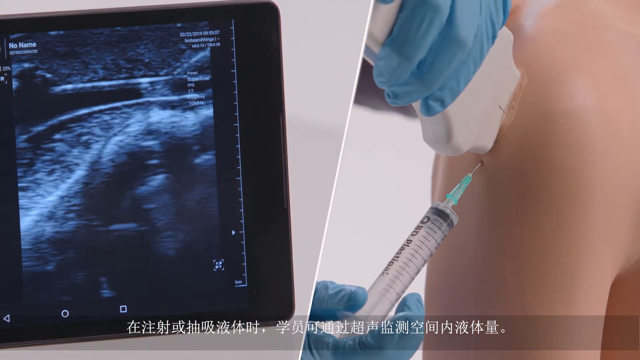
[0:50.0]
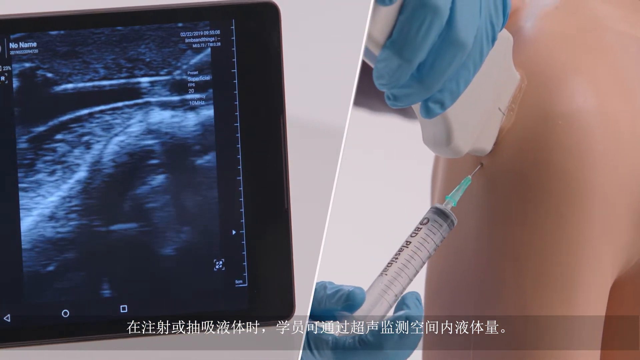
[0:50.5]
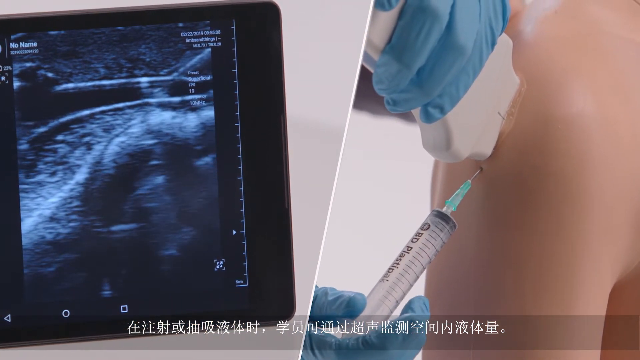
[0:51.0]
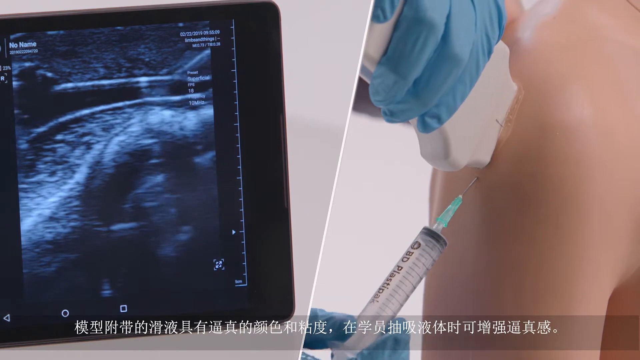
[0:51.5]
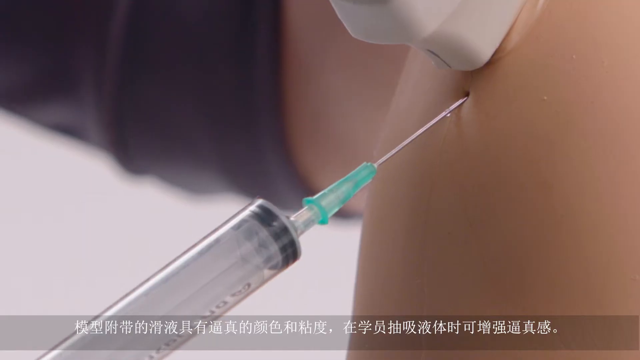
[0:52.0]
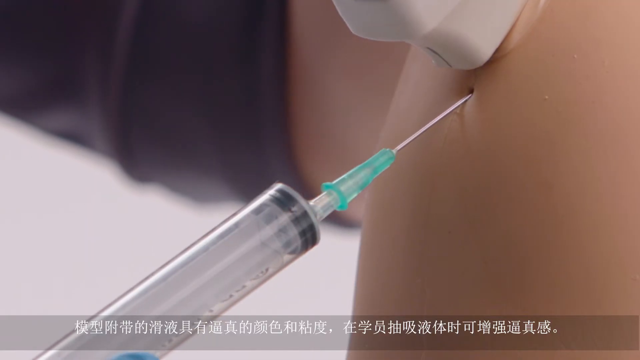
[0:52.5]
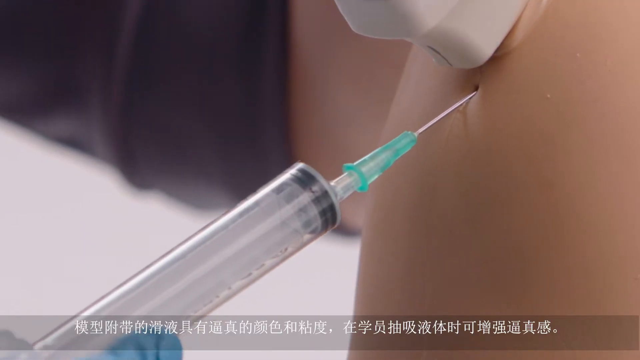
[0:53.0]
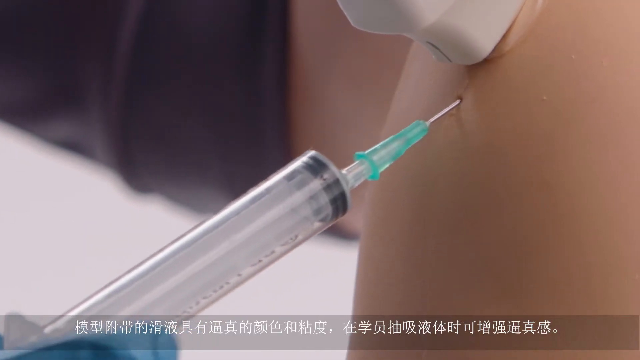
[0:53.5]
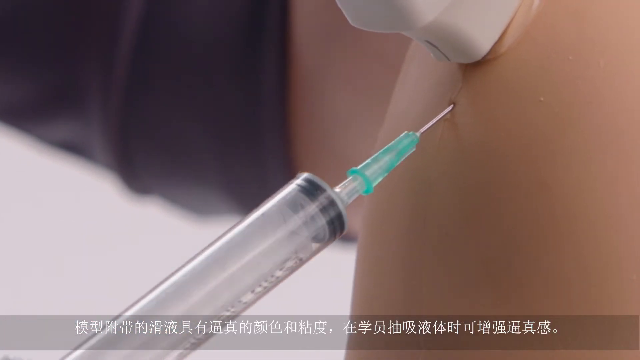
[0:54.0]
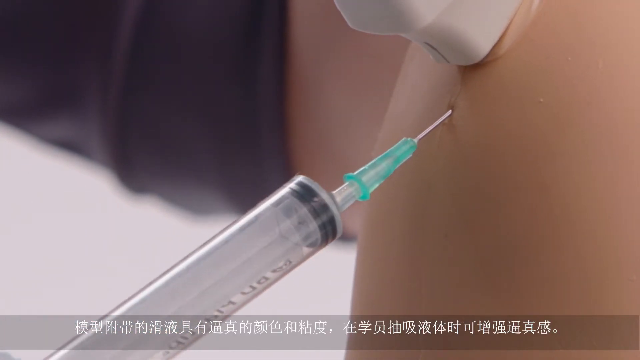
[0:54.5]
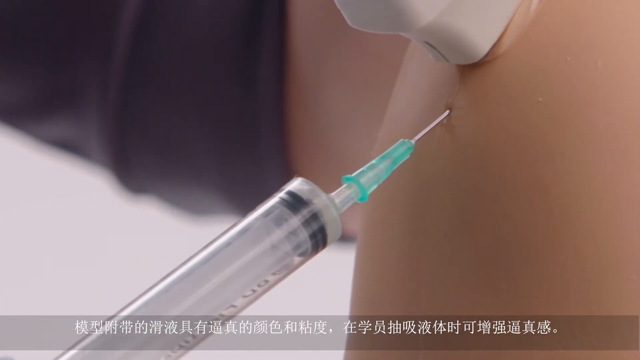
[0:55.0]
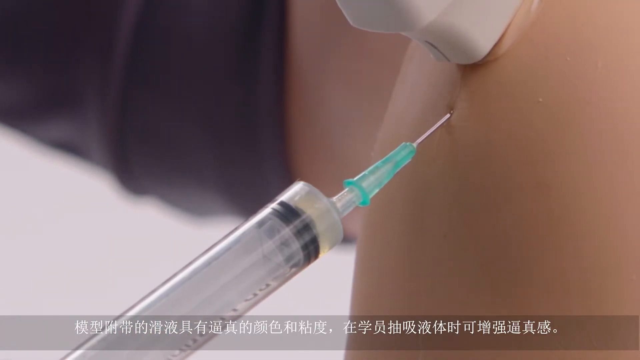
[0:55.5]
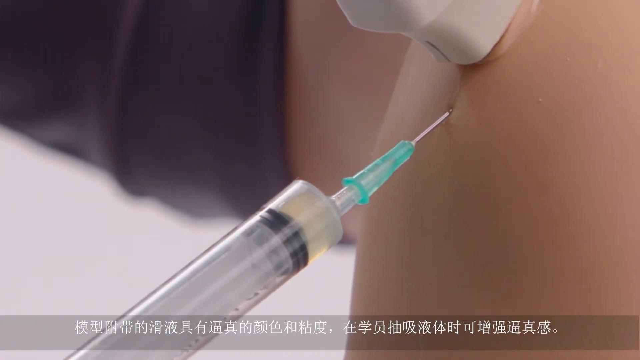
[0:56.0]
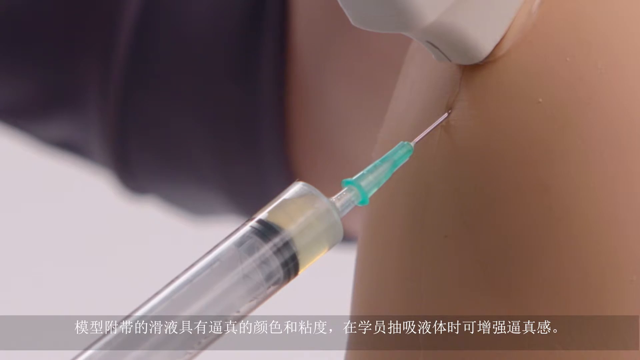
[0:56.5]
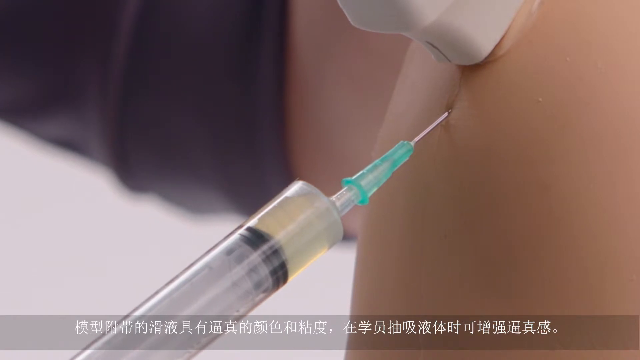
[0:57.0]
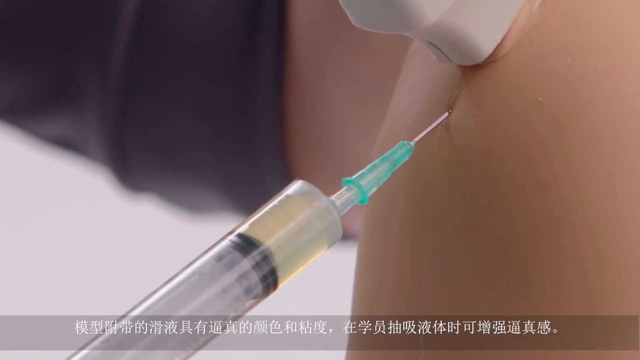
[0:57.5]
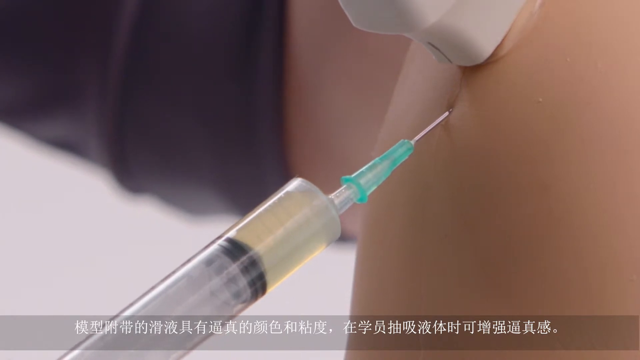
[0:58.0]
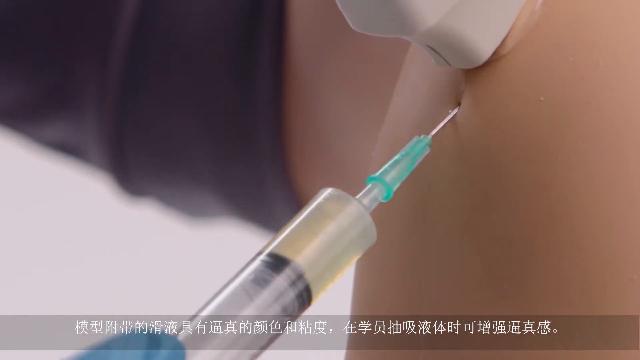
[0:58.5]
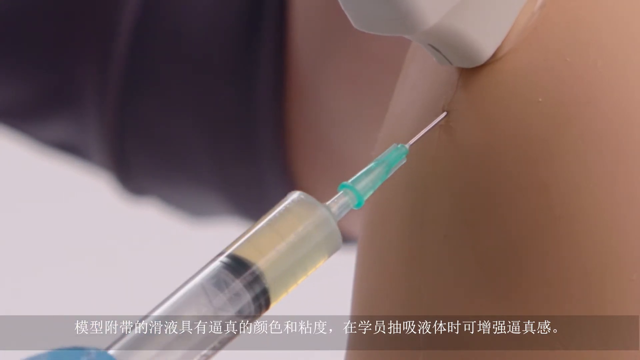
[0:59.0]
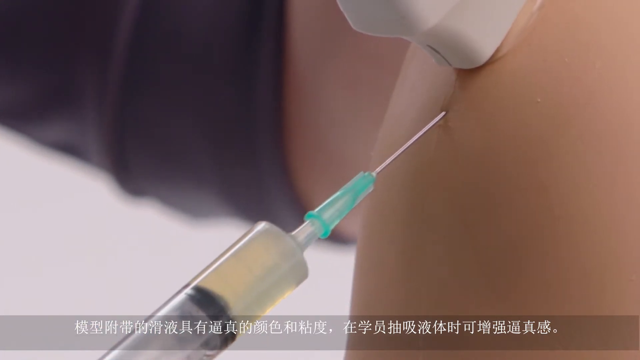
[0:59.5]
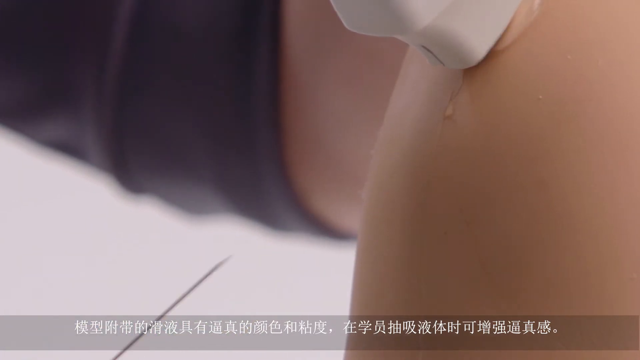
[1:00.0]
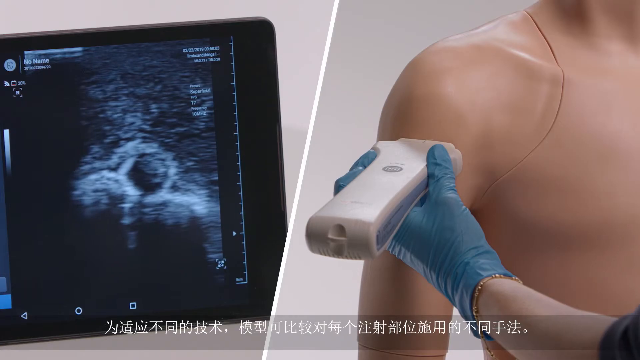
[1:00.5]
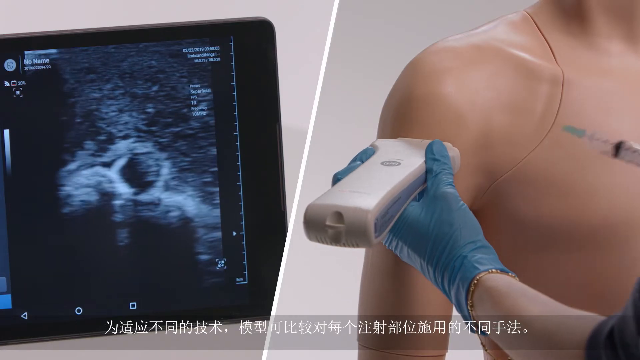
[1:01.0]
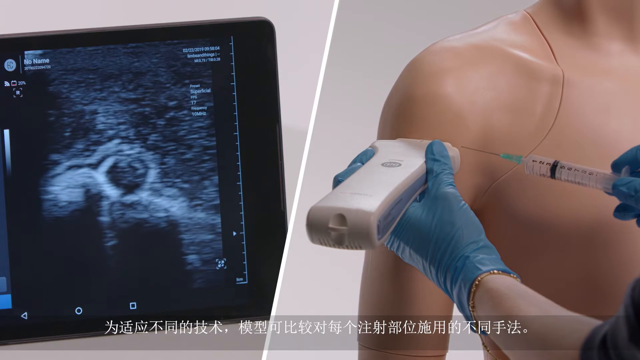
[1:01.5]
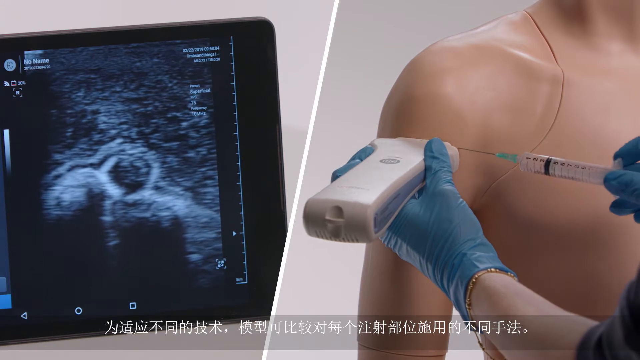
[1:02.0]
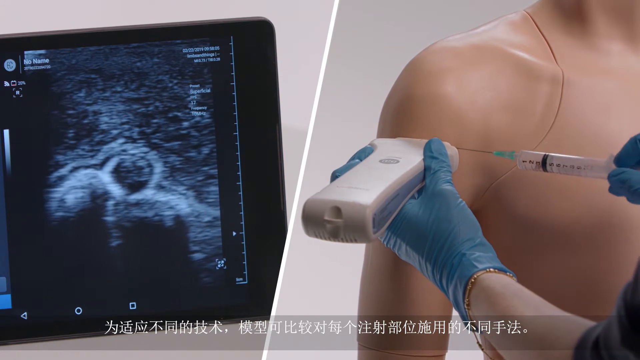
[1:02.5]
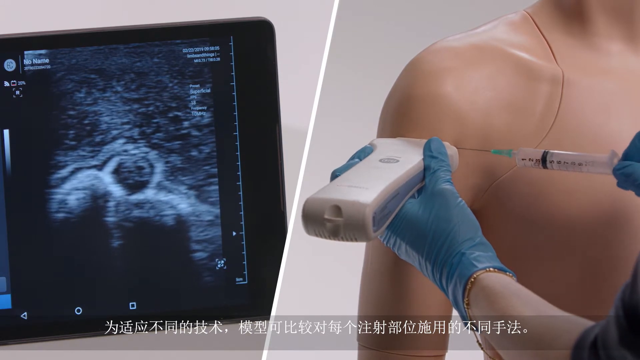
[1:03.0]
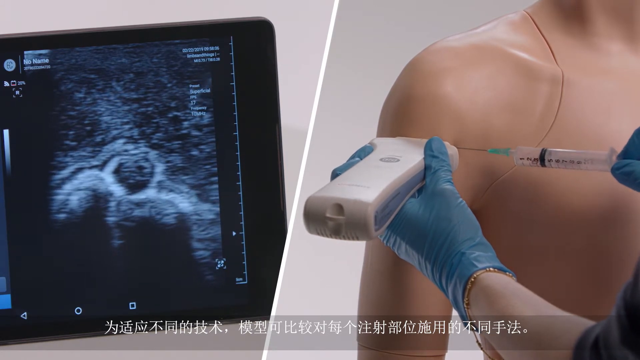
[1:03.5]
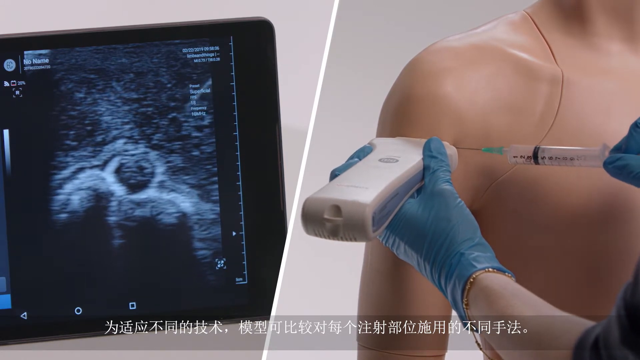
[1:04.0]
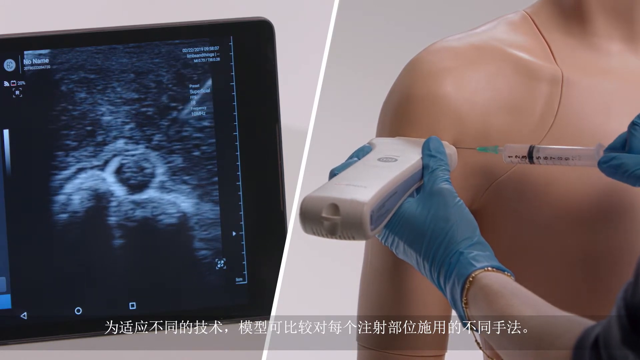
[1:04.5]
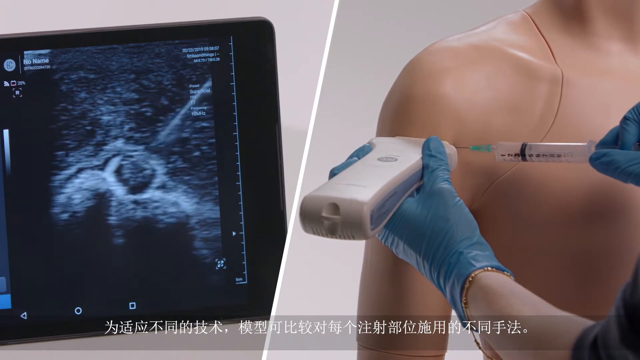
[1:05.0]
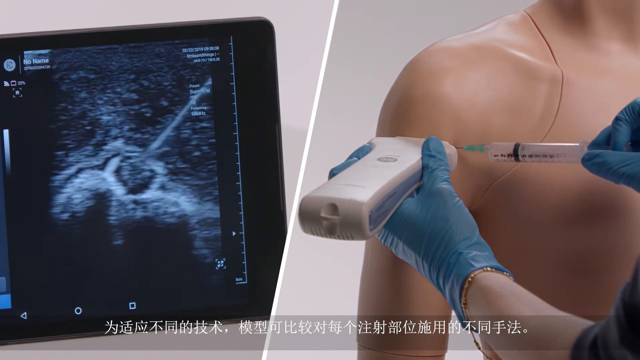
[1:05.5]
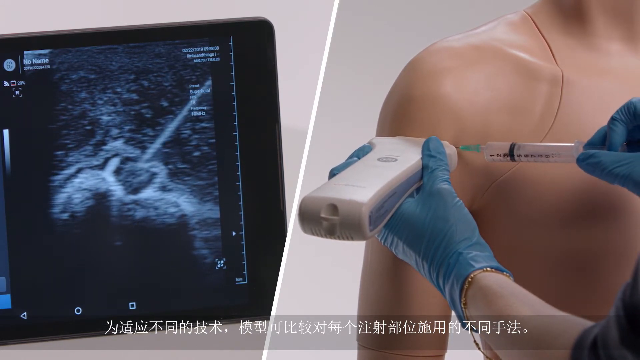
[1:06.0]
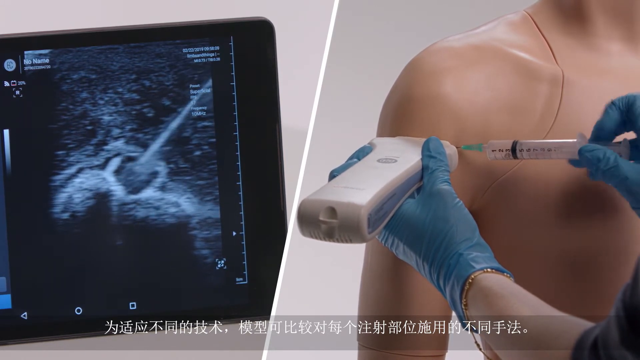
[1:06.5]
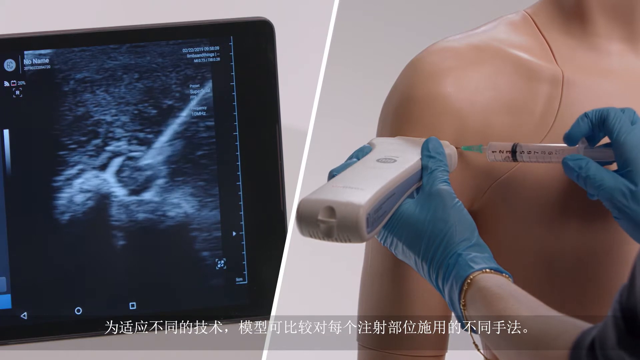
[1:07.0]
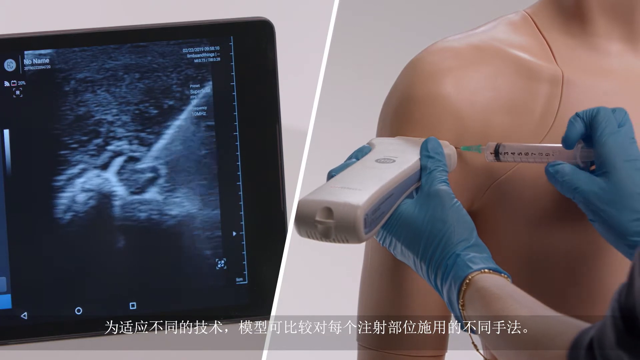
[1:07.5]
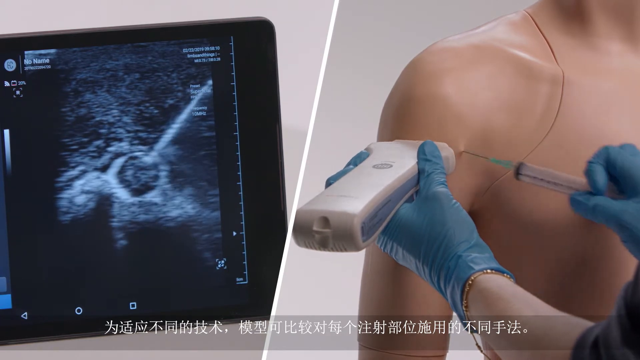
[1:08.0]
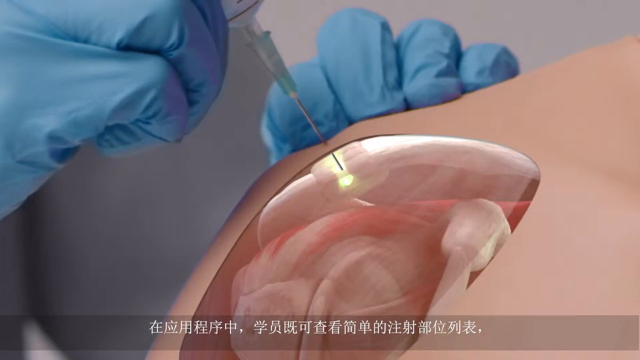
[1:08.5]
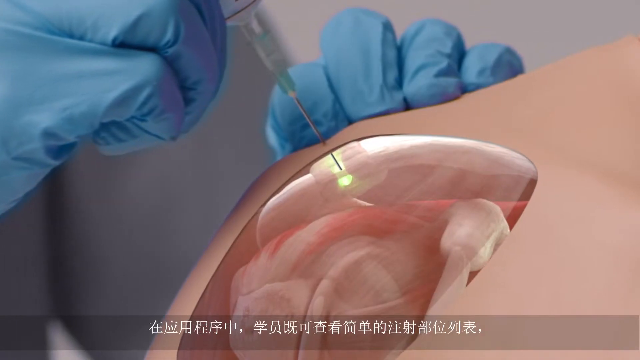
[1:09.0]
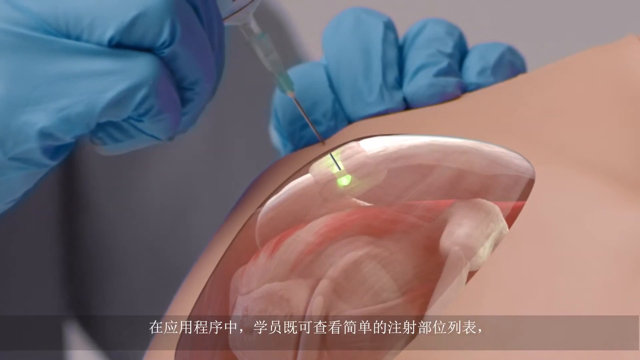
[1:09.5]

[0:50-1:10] A close-up shows the needle puncturing the skin and flesh of the dummy, which looks very lifelike and seems to be a soft silicone. As the needle goes in, the nurse looks like she is drawing out some kind of liquid, extracting it from the shoulder joint rather than injecting. Next, a double screen appears: on the left, the image on the iPad shows the scan of what is going on underneath the dummy's skin; on the right, the nurse holds the scanner against the shoulder, inserts the needle, and gives the injection, while the scanner image on the left shows the injection going in.